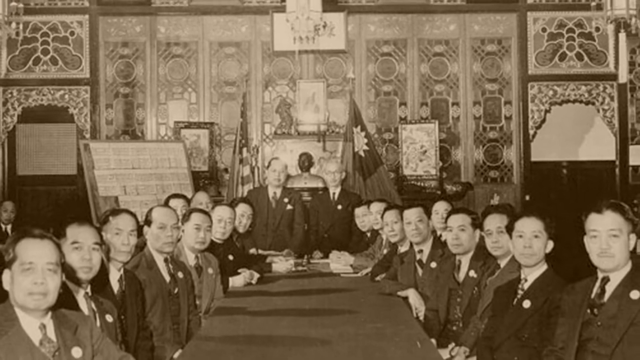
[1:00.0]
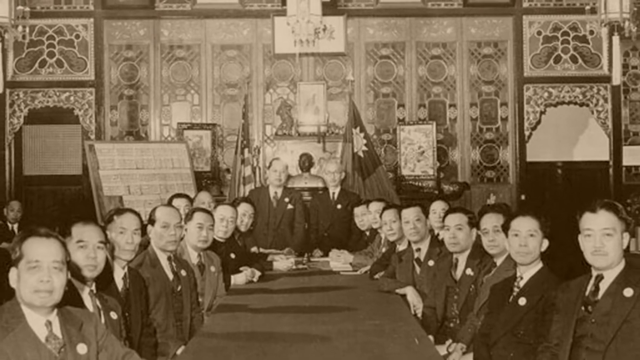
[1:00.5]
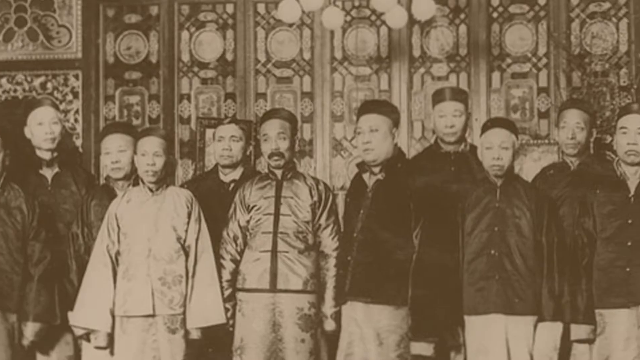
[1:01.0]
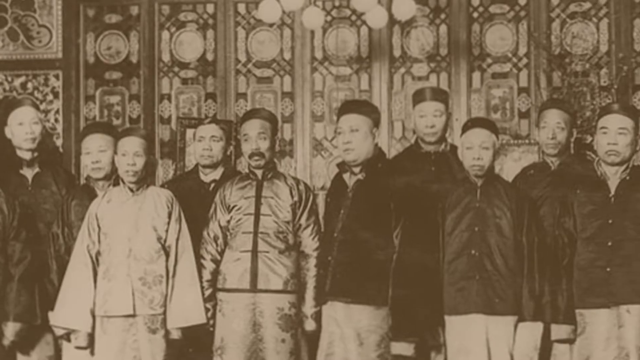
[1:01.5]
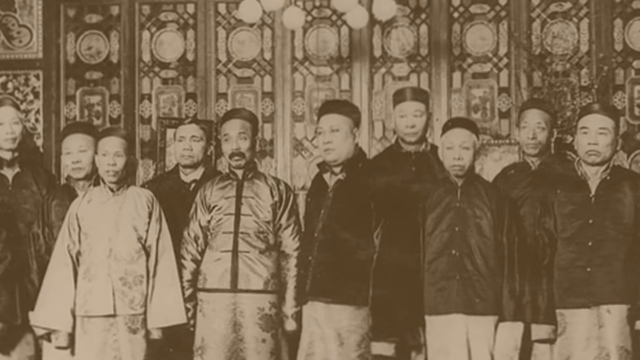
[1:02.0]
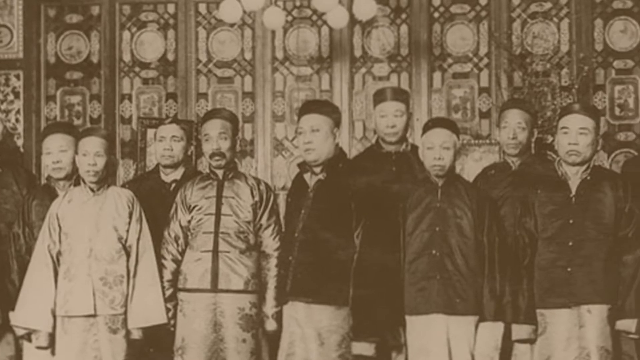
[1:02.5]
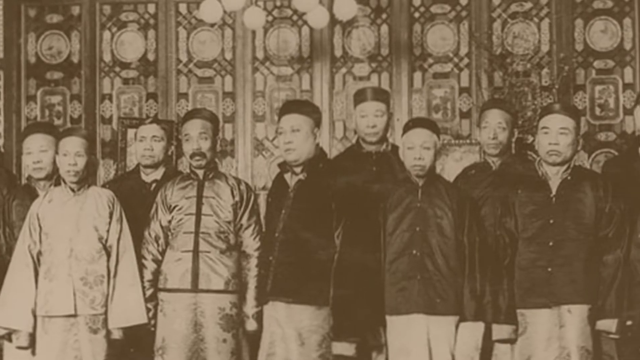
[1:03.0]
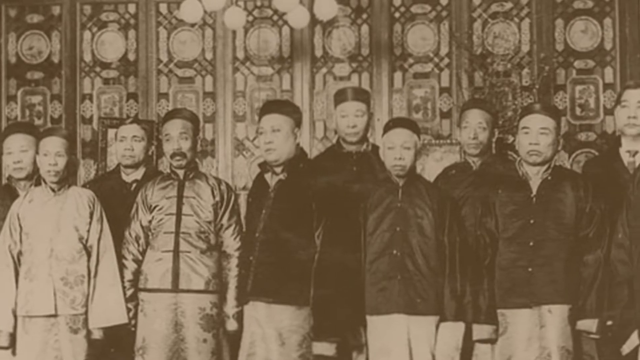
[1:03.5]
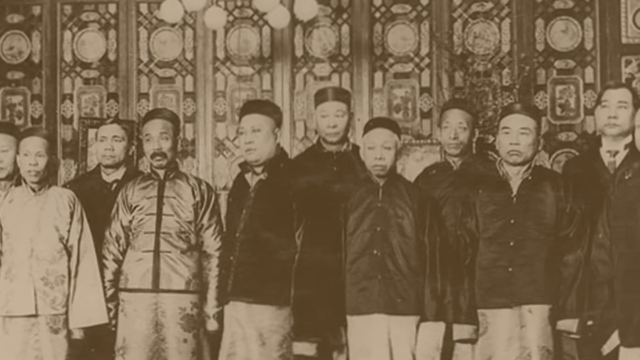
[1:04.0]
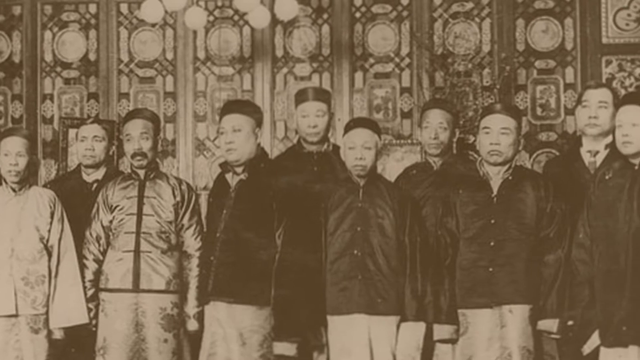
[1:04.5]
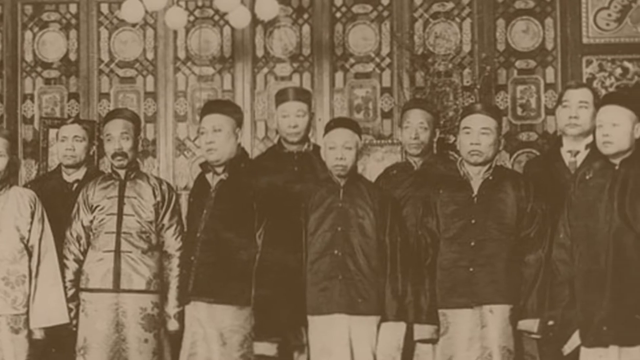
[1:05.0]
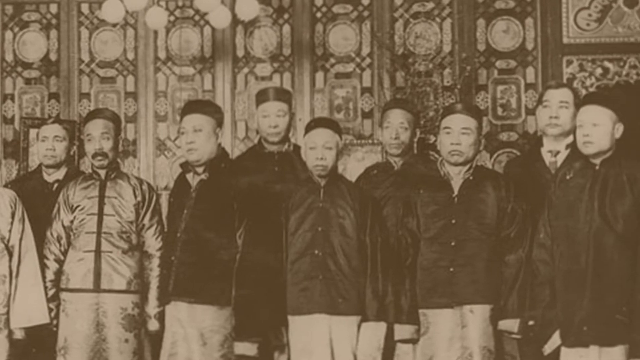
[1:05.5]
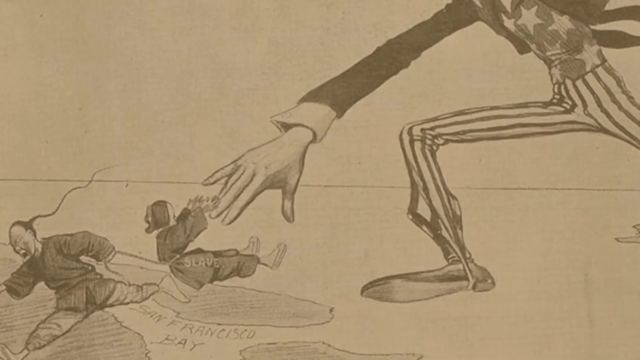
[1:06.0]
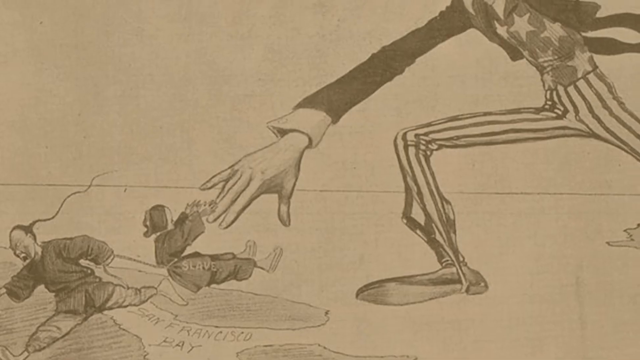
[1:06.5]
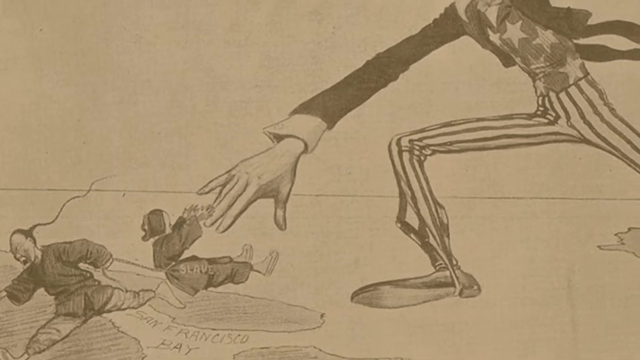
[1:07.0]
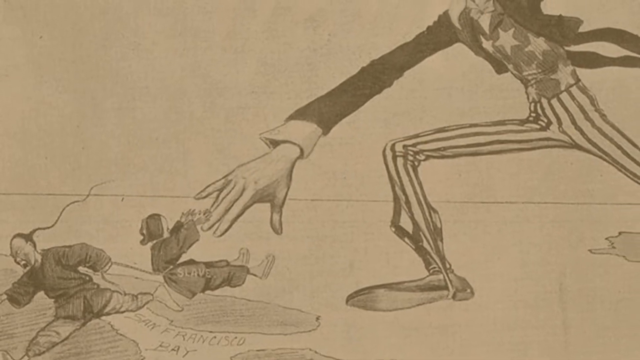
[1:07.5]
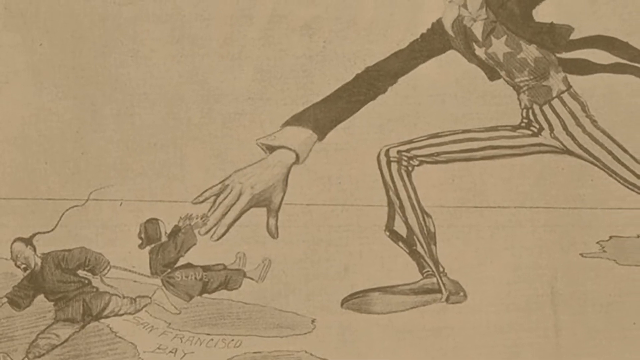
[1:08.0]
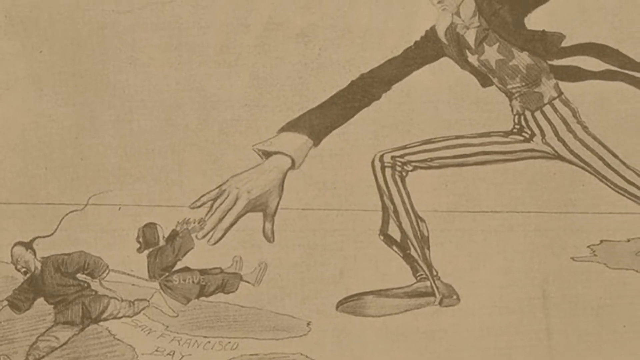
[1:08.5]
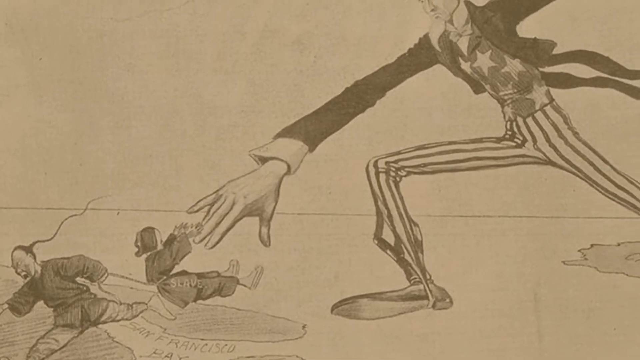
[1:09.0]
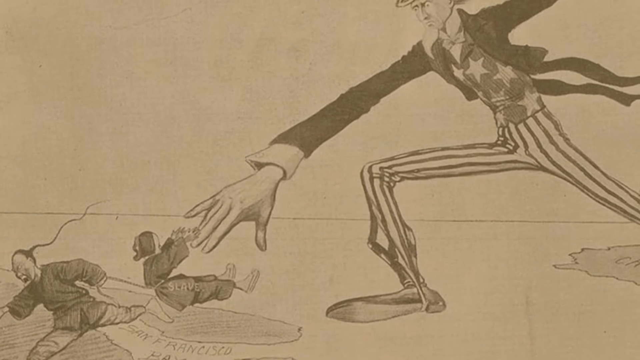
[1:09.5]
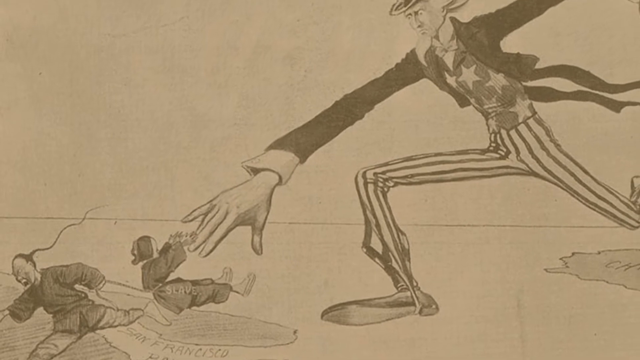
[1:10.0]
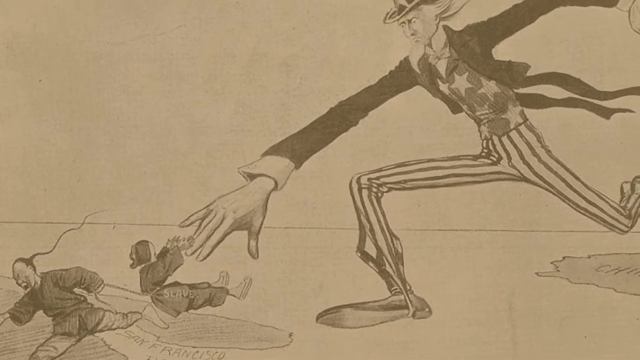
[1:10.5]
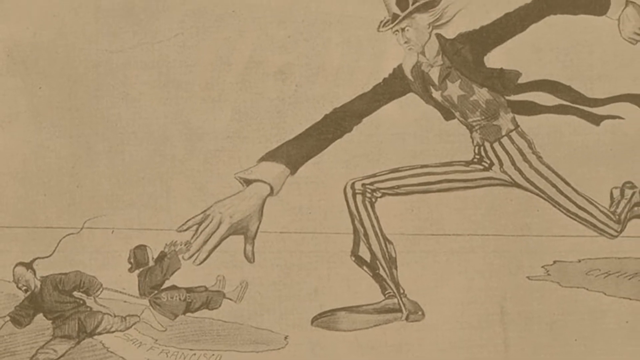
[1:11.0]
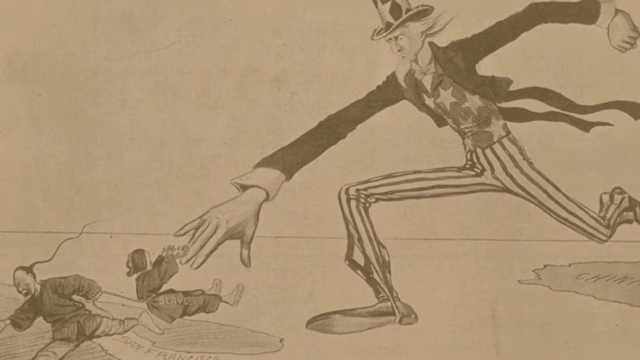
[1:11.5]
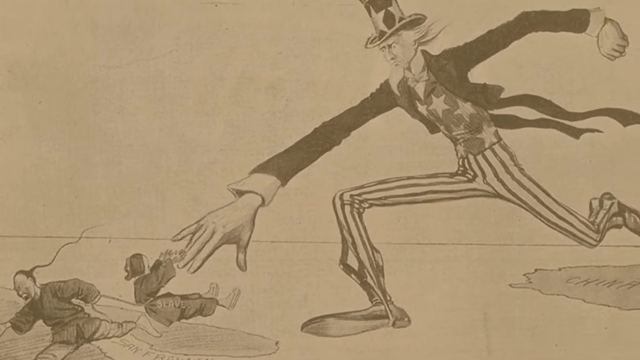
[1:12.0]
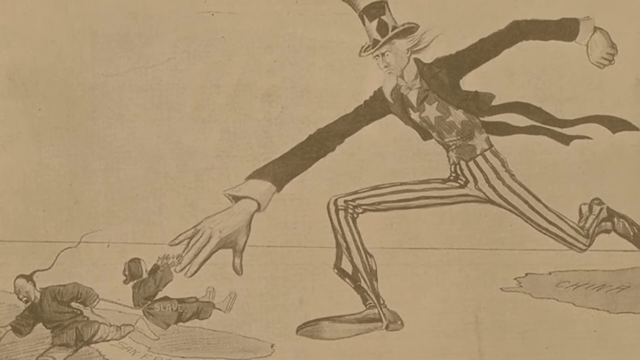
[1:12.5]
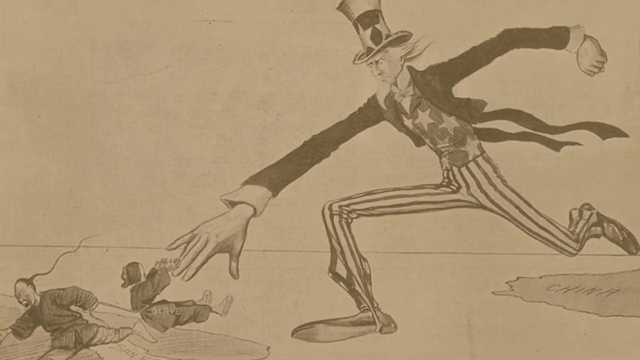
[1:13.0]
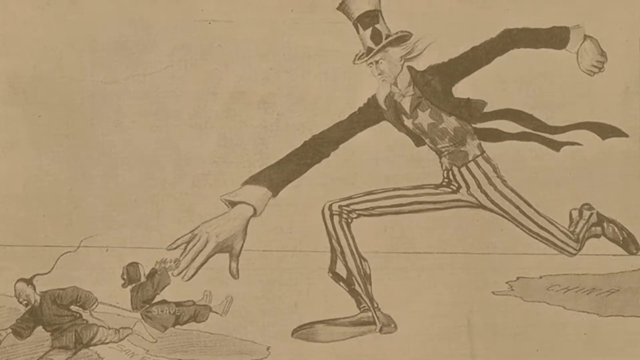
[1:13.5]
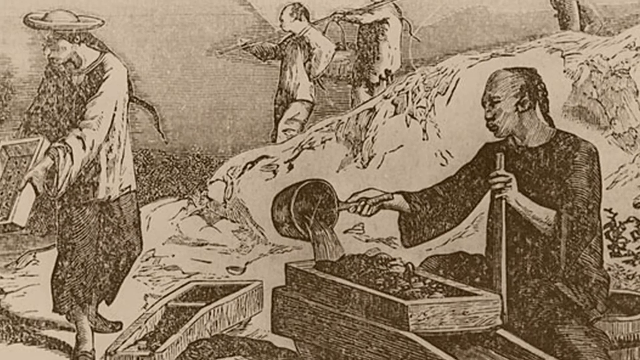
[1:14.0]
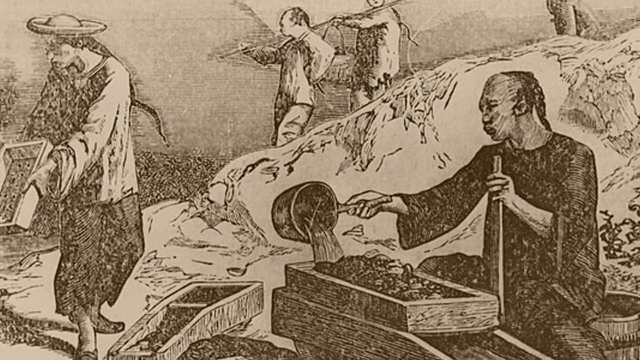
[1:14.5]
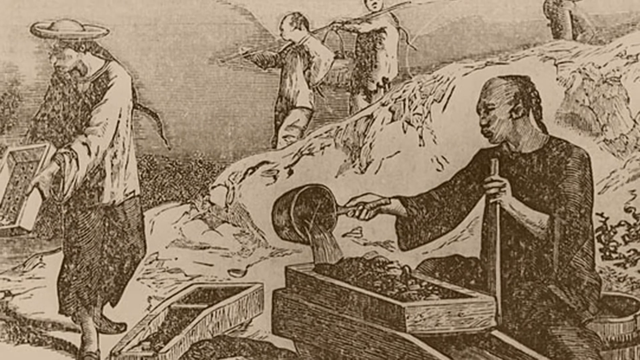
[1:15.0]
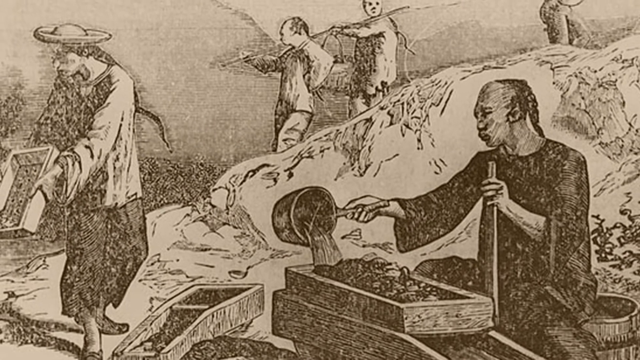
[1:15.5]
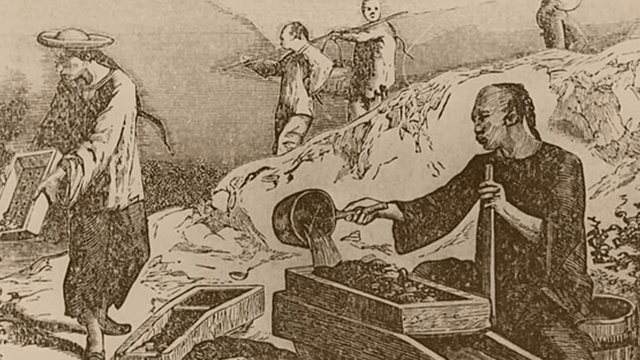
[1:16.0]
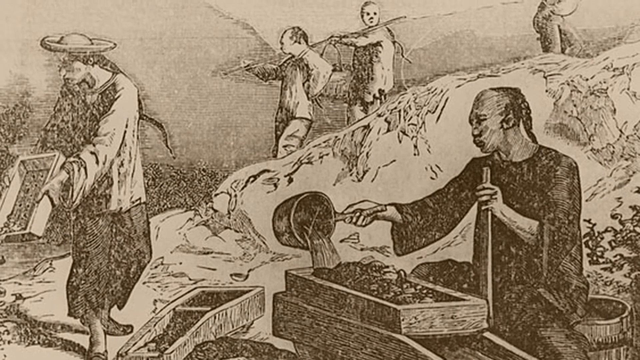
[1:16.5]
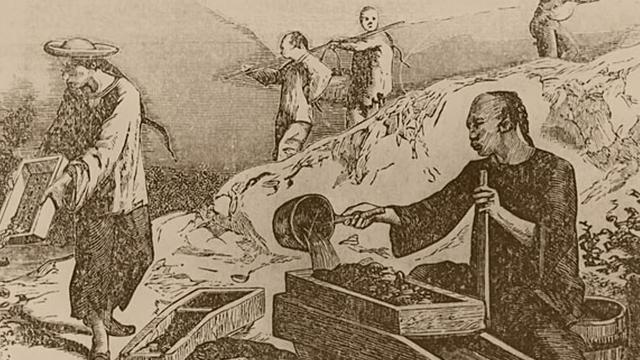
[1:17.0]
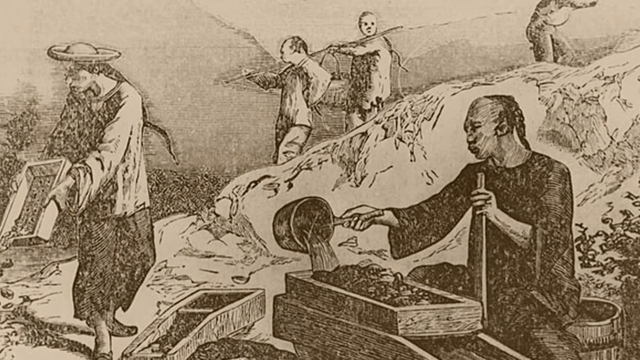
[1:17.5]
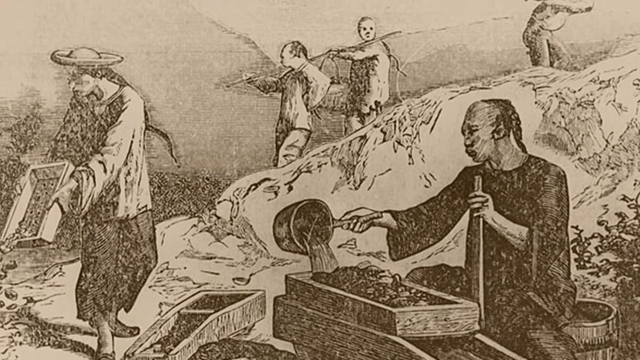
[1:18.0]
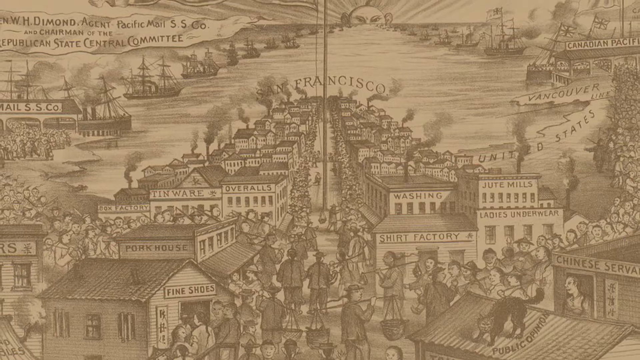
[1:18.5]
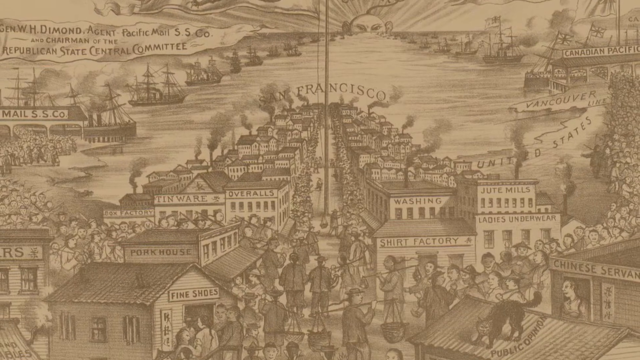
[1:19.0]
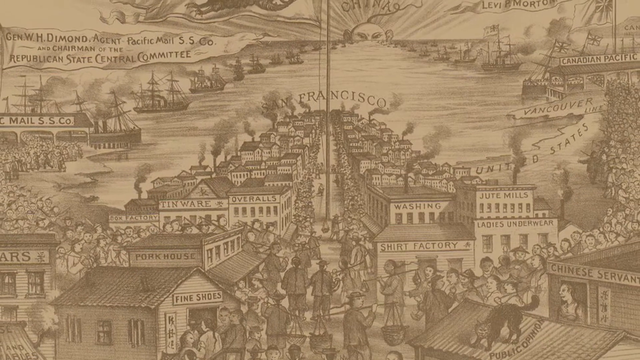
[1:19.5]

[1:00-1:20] An image shows many Asian men sitting at a table, with two men standing at the end of the table. The image looks very old, maybe from the early 1900s. The video switches to another image of Asian men all standing against a wall, wearing traditional Asian clothing and traditional Asian hats; they don't look very happy. Next is an image of a giant Uncle Sam holding his hand out to Asian people illustrated at the bottom left of the screen, with an illustration of the continent of China at the bottom right. Then comes what looks like an old illustration of what appear to be Chinese or Asian men working, perhaps at a place where they are looking for gold or silver. They have sieves and are pouring water over them, apparently looking for precious metals.